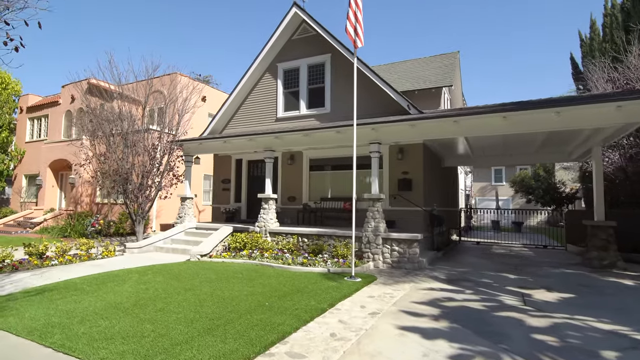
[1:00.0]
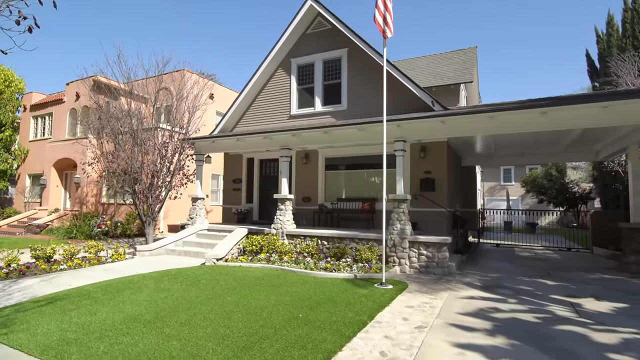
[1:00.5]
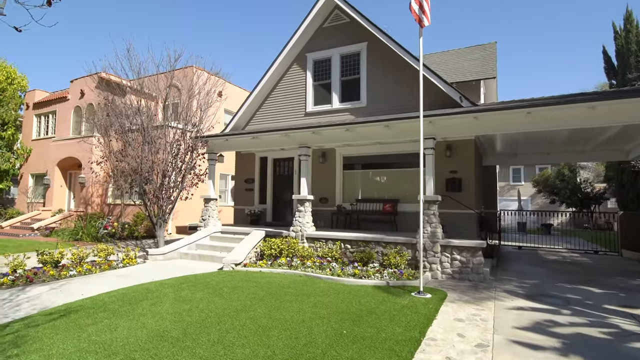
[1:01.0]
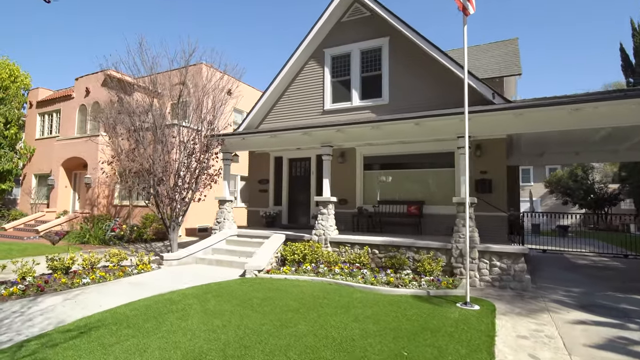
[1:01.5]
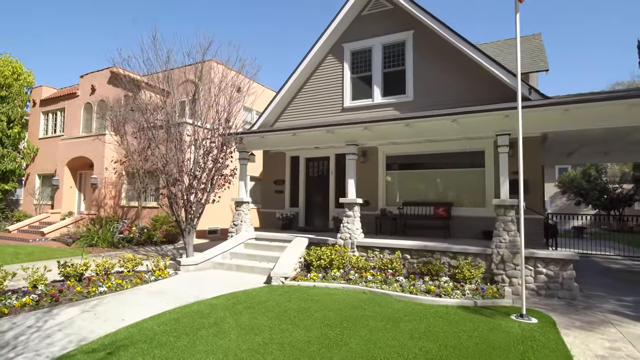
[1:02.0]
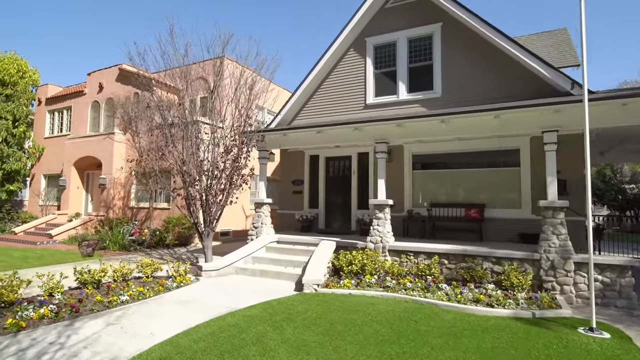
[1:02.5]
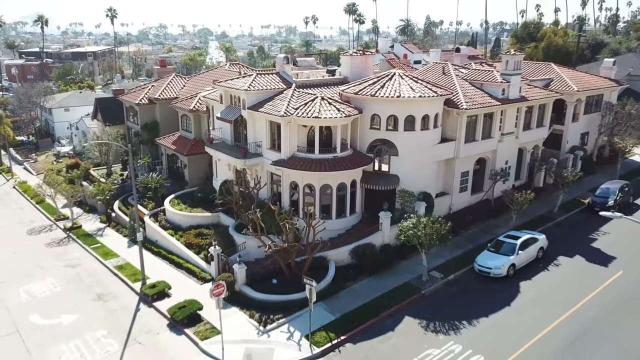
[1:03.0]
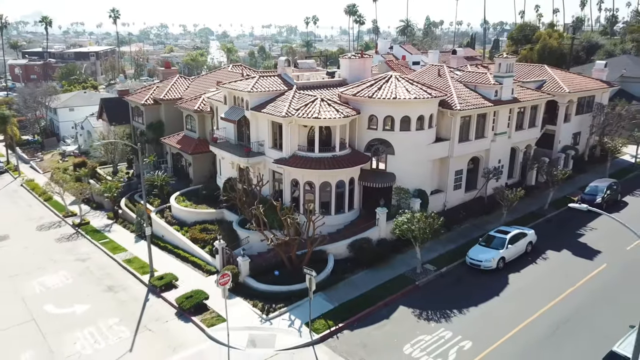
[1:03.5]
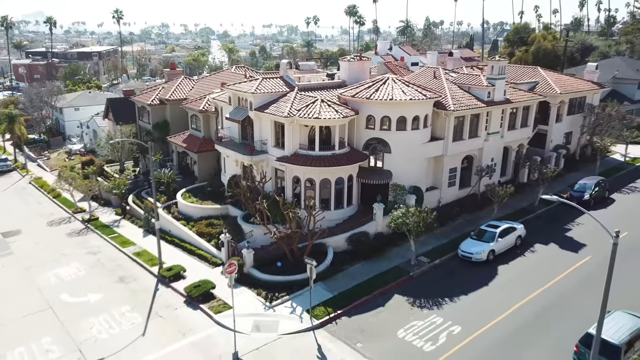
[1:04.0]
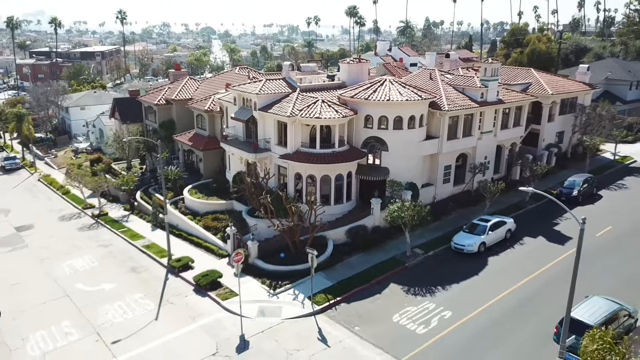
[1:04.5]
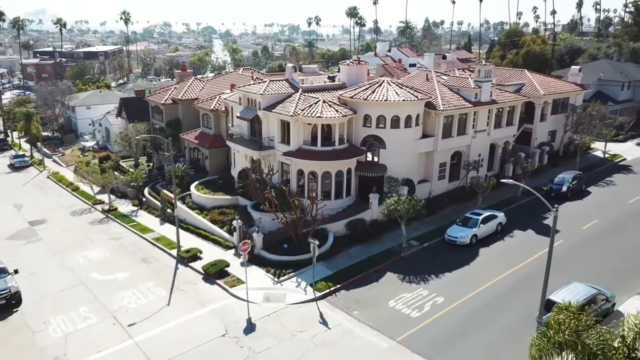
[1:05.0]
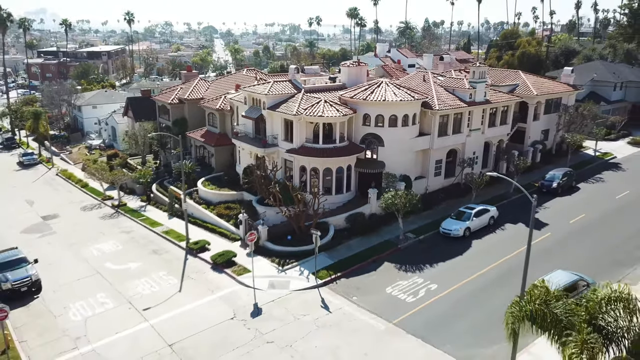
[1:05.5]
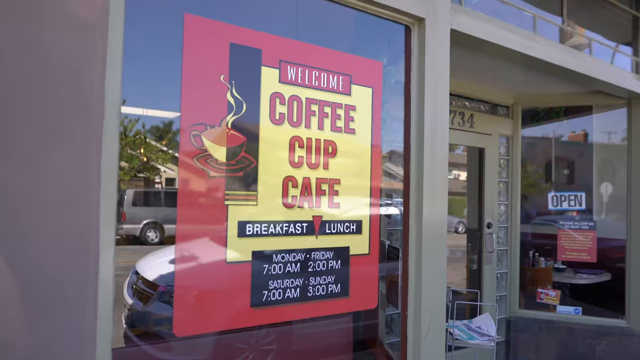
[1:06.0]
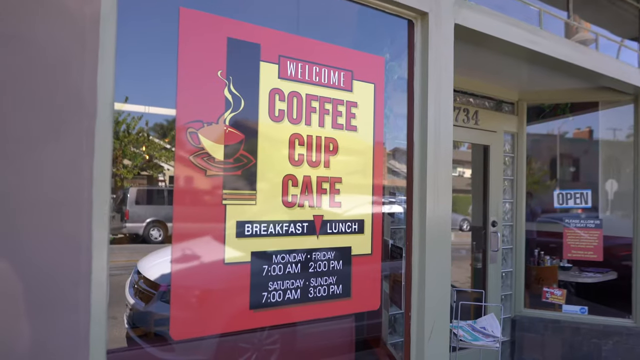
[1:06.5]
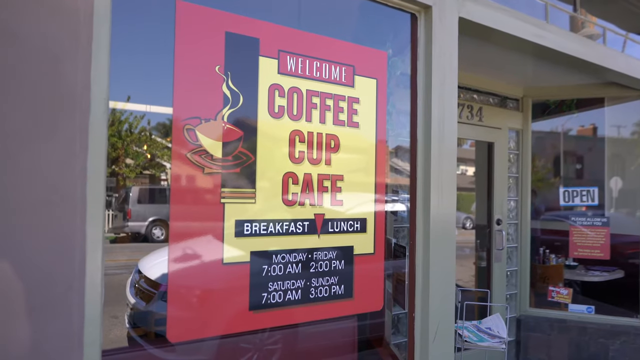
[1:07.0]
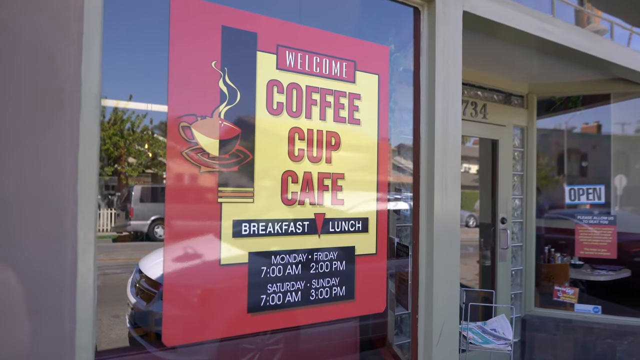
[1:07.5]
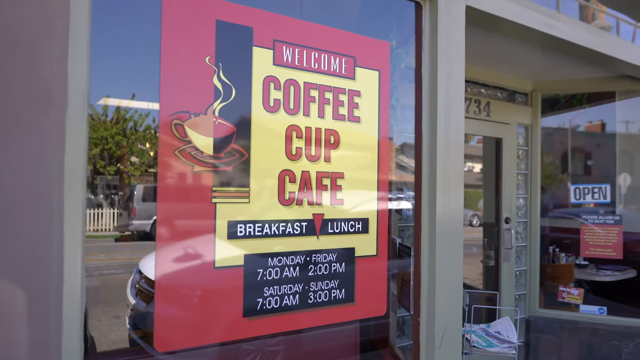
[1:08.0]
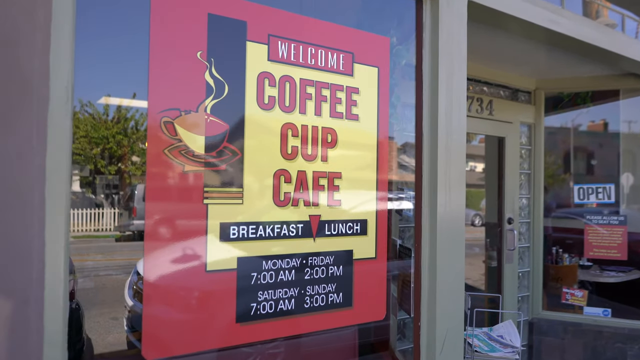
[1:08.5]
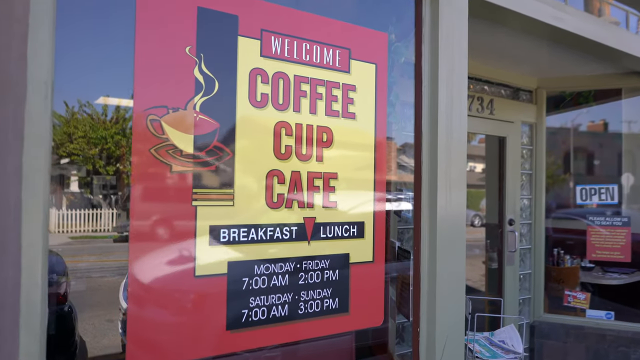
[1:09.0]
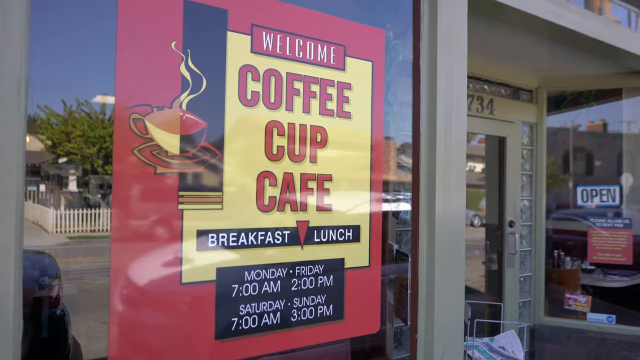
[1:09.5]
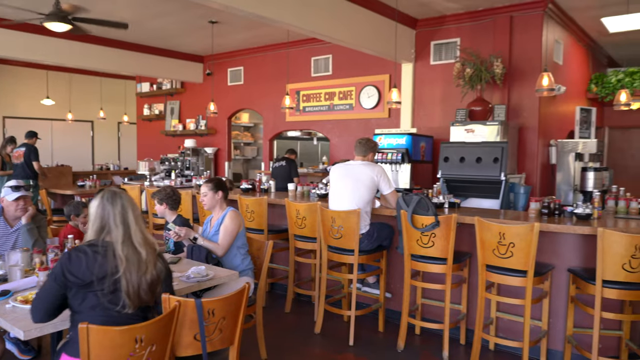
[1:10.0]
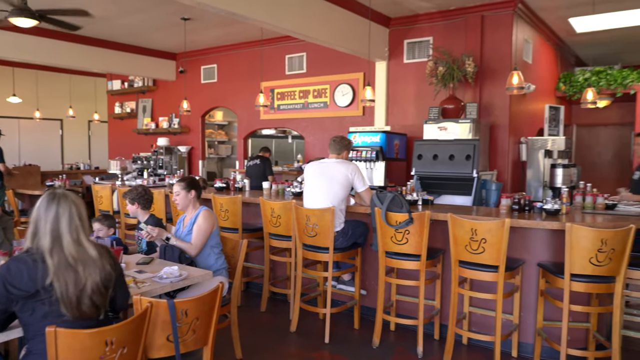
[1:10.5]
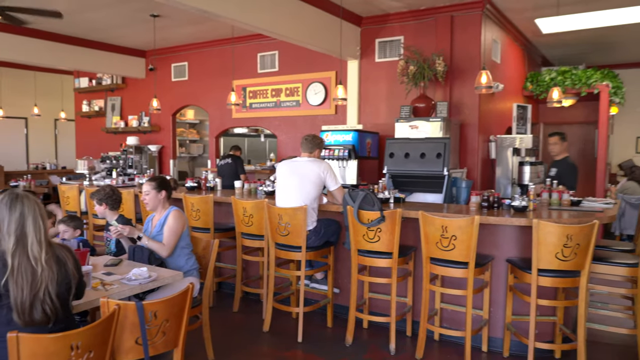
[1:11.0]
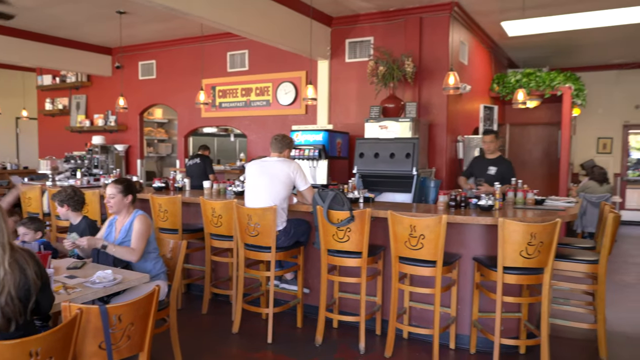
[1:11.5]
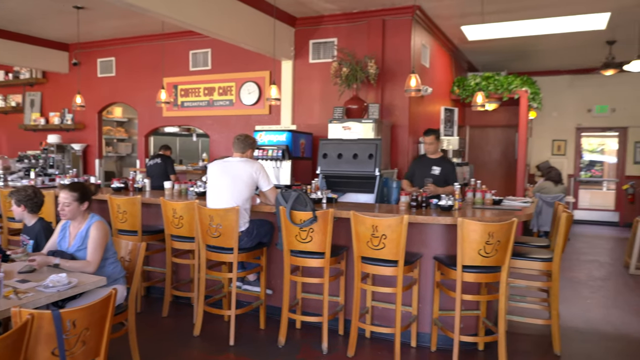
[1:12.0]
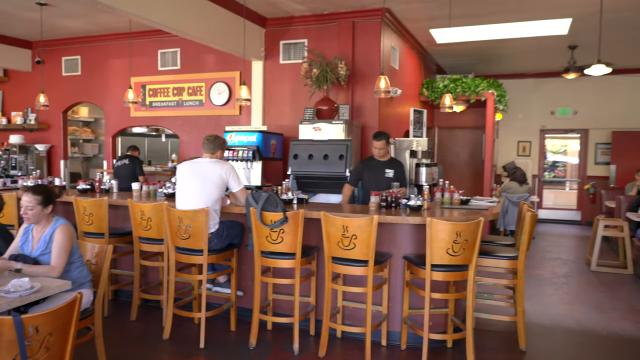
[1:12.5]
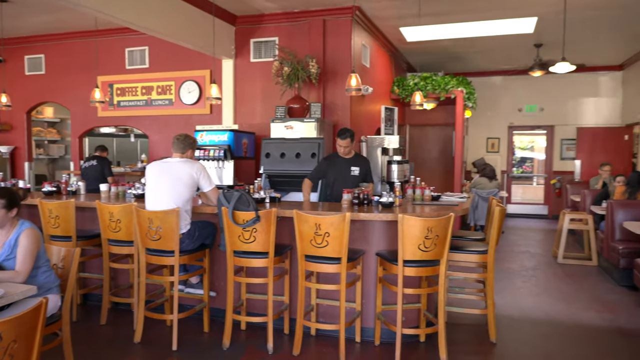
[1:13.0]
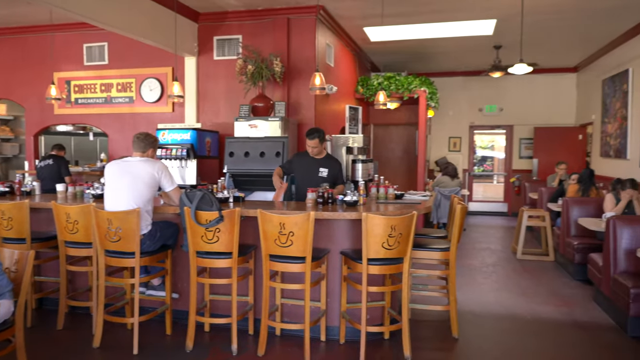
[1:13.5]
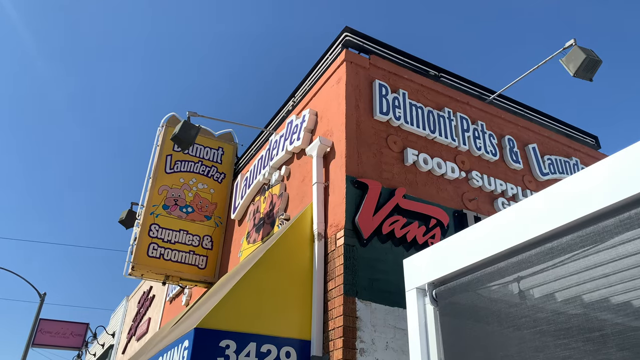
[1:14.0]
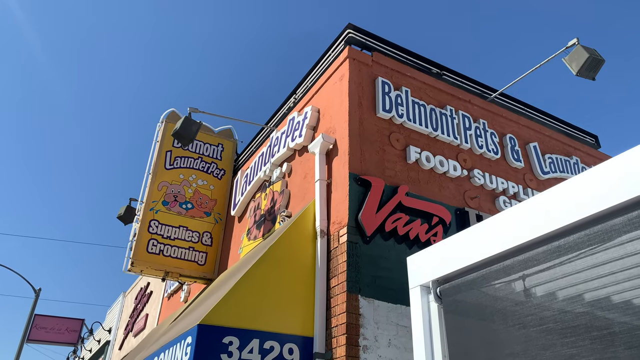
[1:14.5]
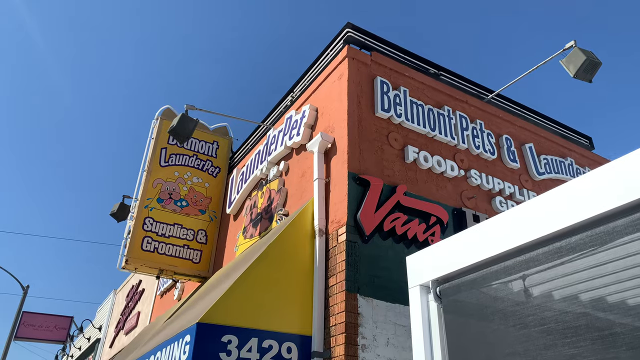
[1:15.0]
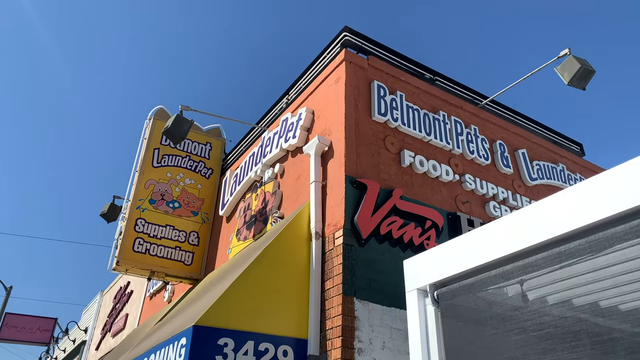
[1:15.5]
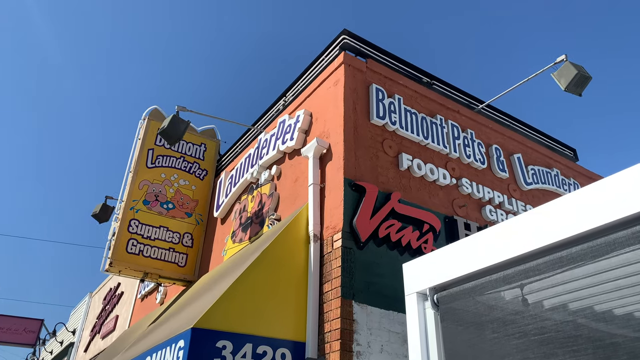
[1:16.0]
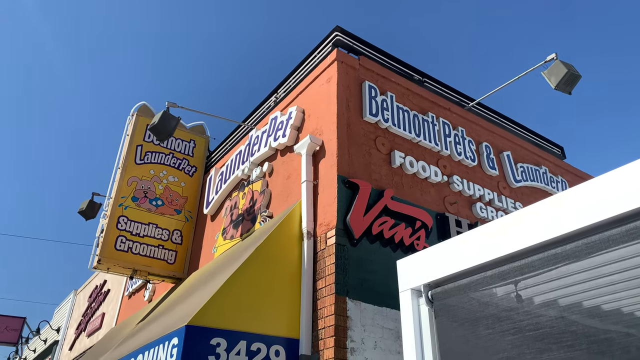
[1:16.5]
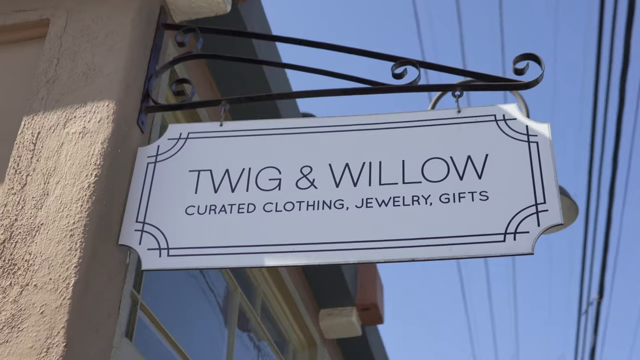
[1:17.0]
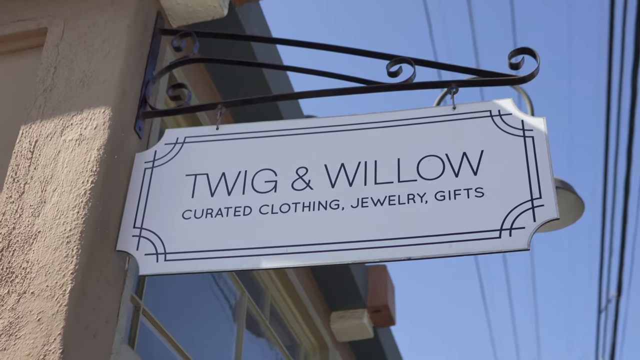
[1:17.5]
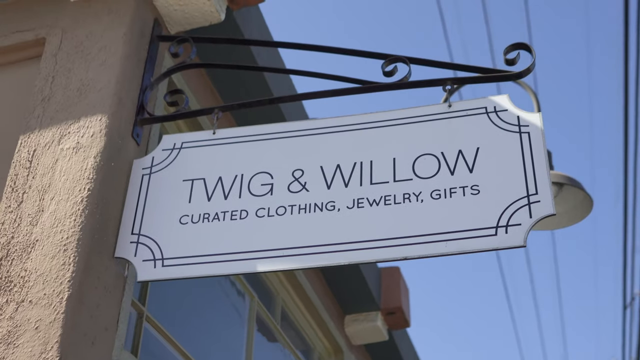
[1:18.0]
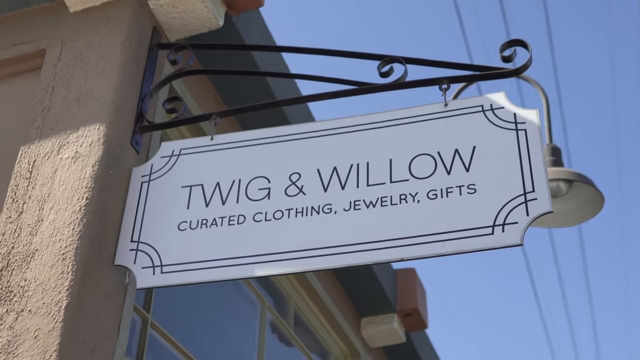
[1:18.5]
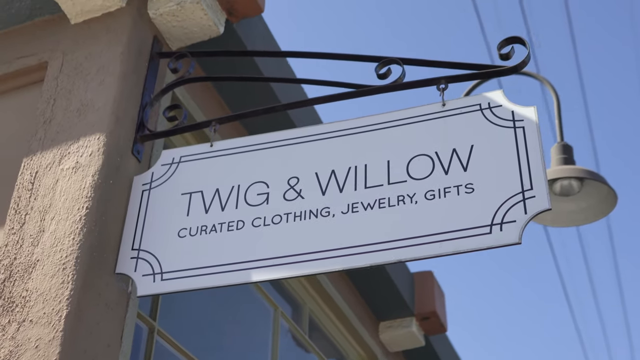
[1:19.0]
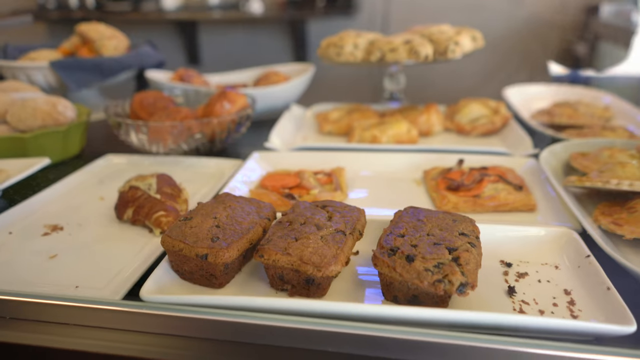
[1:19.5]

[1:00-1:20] A two-story house appears, whose lower part looks like a garage where cars can be parked. There is a shed and a red and white flag in the yard, with a very well-trimmed green lawn, and the entrance is at the front of the house. The video moves around showing buildings, including a green building. It then shifts to a coffee shop with red walls and people inside. Outside it is red, with posters advertising what might be on special that day. It is filled with people seated on wooden high chairs. It seems like a shopping center with different food shops, possibly close to the neighborhood.